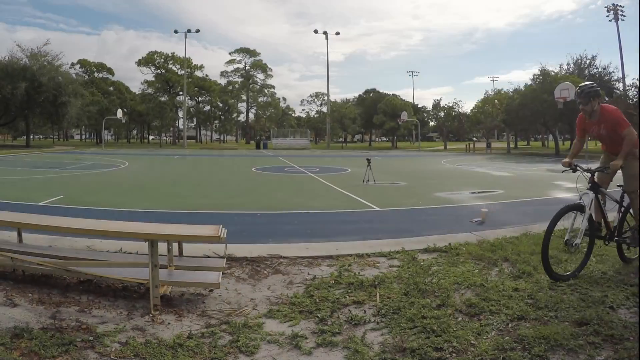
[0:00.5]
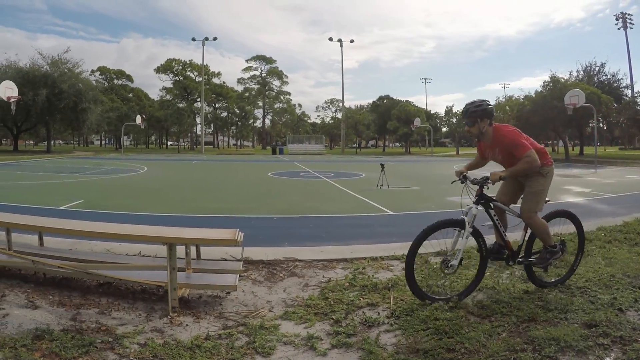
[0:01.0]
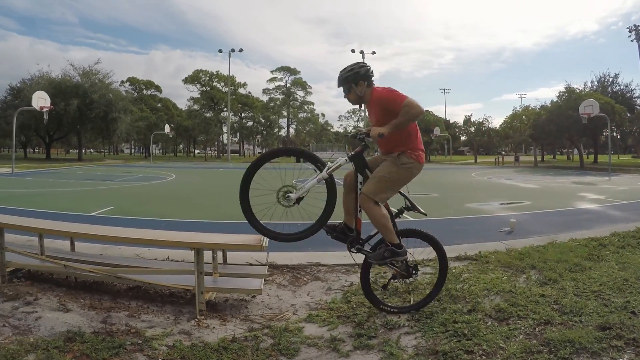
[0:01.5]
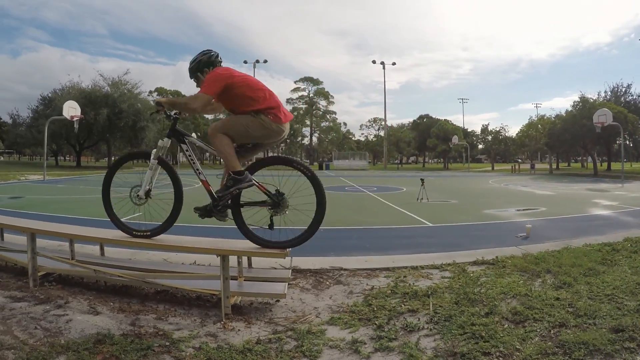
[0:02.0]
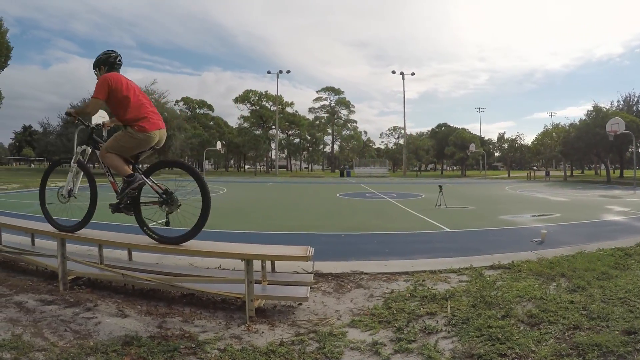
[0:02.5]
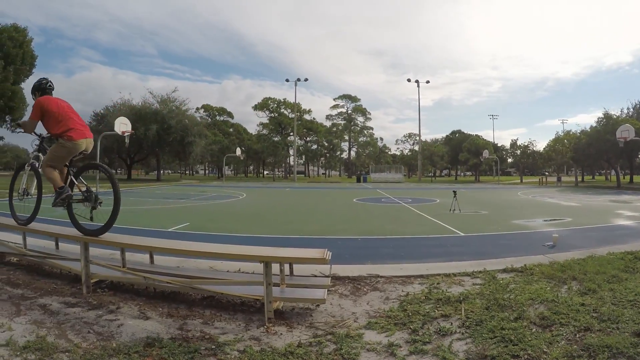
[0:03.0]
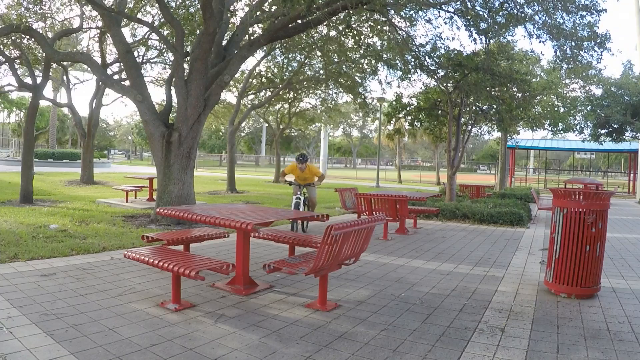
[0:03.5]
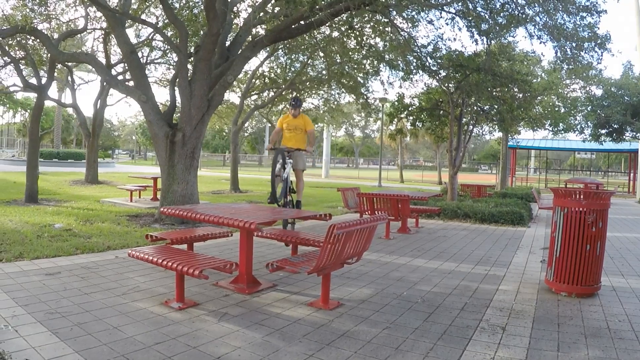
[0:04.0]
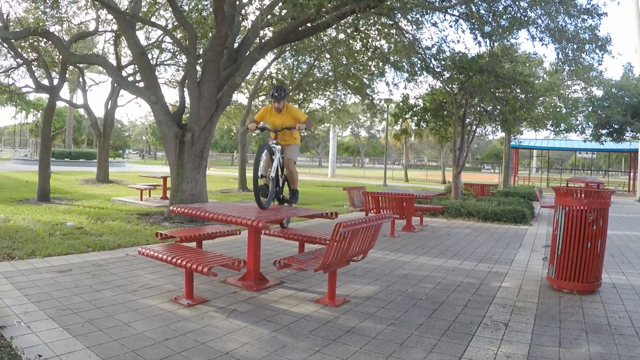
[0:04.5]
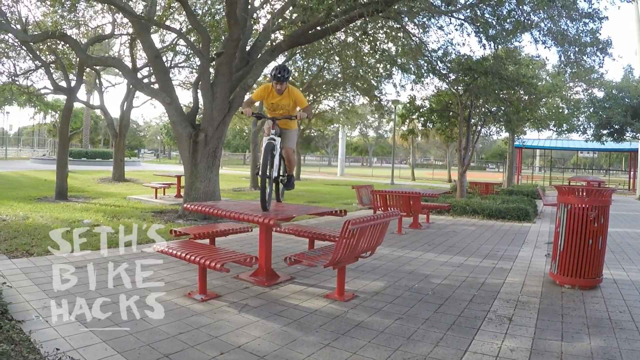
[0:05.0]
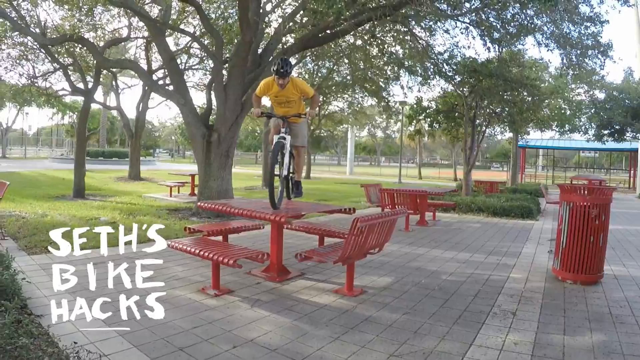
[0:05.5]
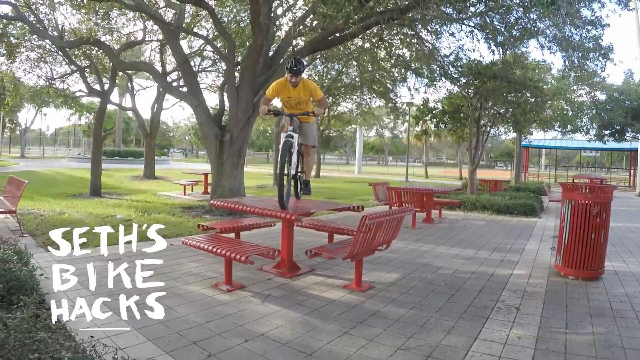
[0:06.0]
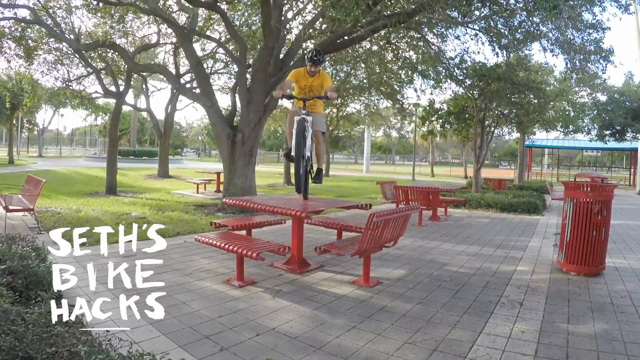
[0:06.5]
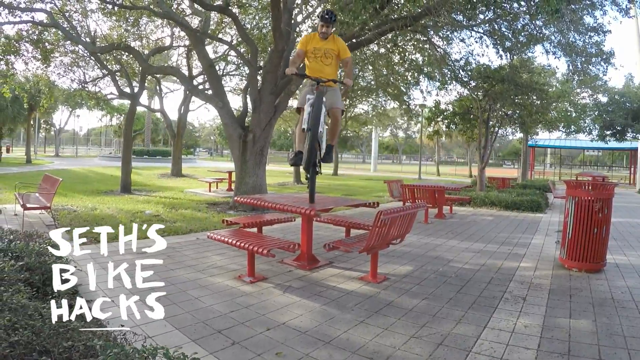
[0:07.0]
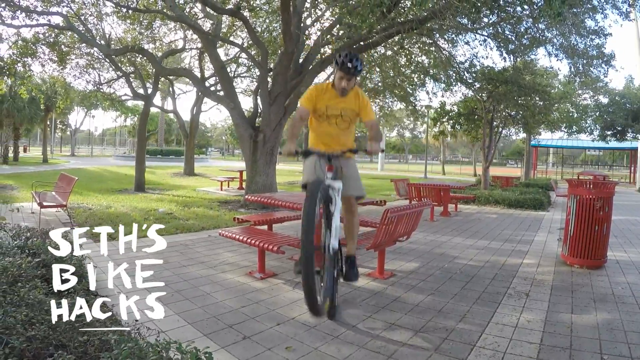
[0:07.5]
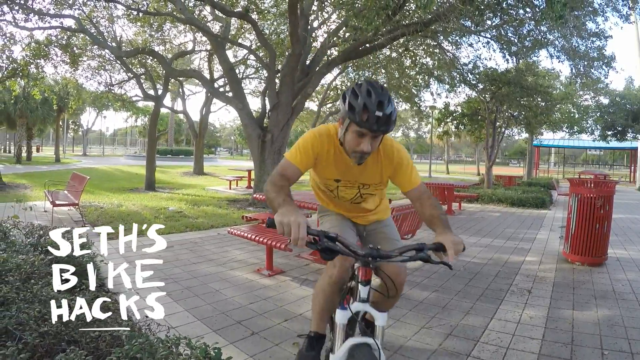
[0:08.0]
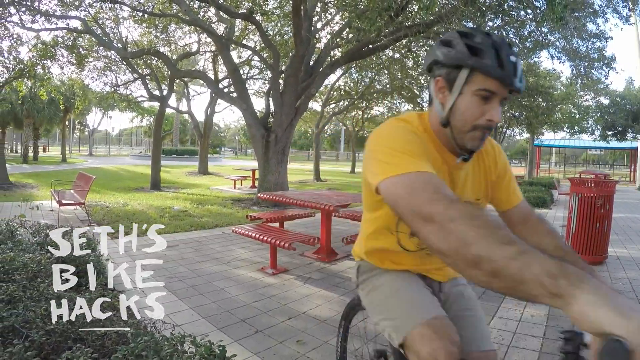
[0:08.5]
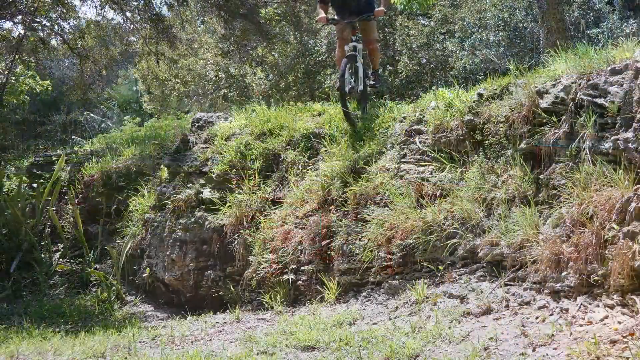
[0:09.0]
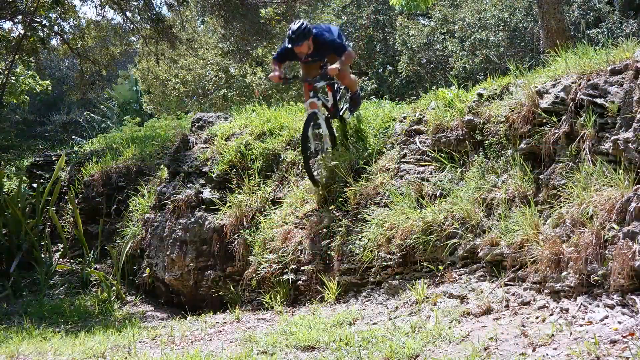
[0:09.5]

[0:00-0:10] A man rides his bike in what appears to be a public park, wearing a helmet on his head. He jumps onto various obstacles in the park, one being a bench that appears to be in front of an outdoor basketball court. Next, he jumps his bike onto a red steel-framed picnic table in the same park. The words "Seth's Bike Hacks" appear in the background along with "how to get up stuff on a trials bike". Finally, the rider goes down a small, steep embankment.